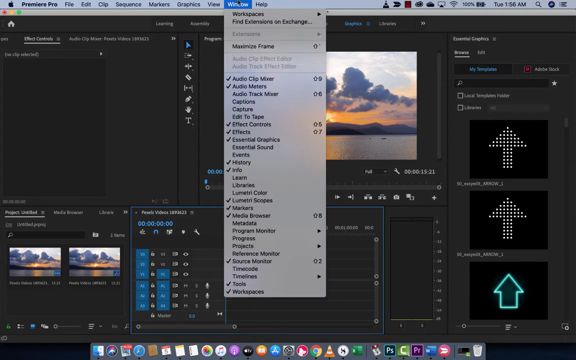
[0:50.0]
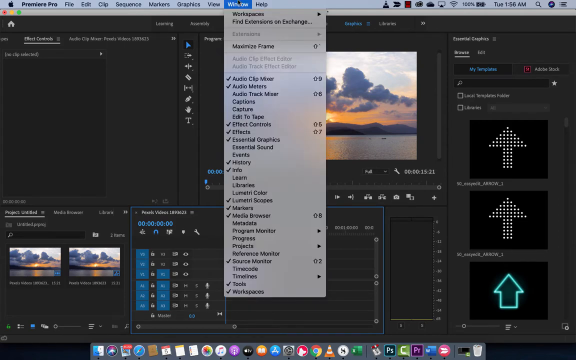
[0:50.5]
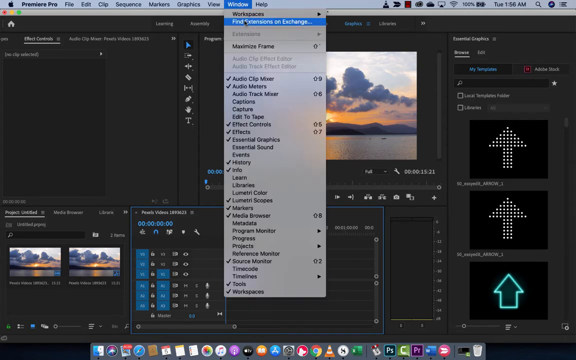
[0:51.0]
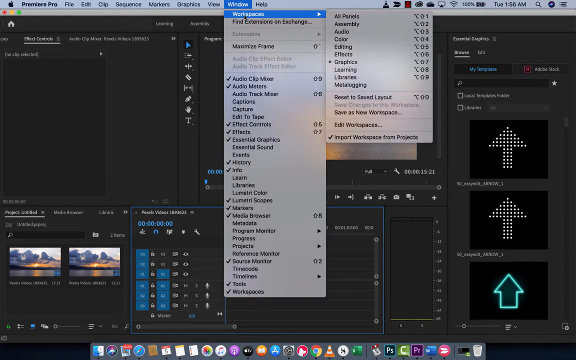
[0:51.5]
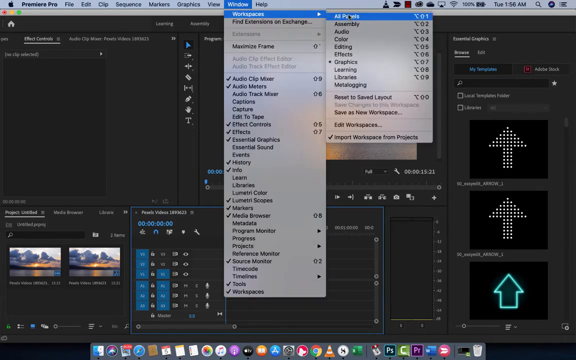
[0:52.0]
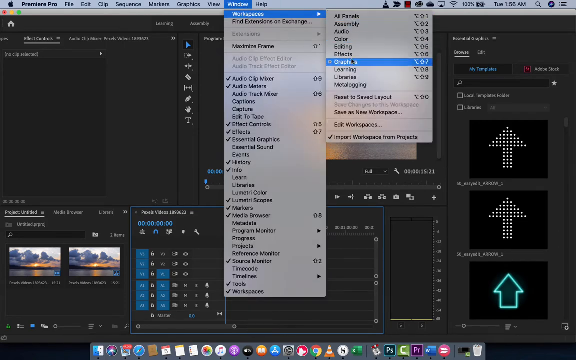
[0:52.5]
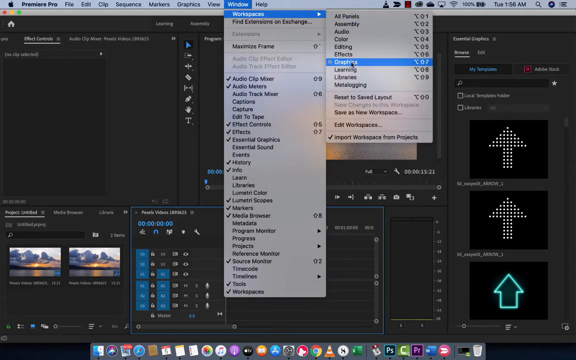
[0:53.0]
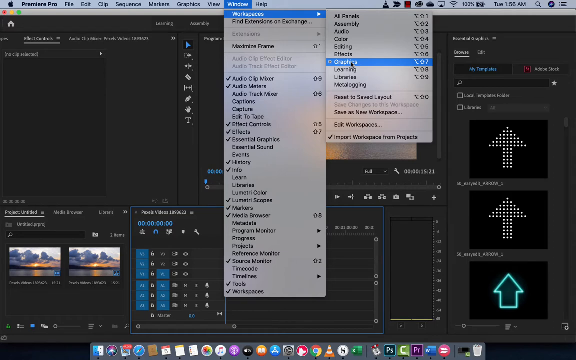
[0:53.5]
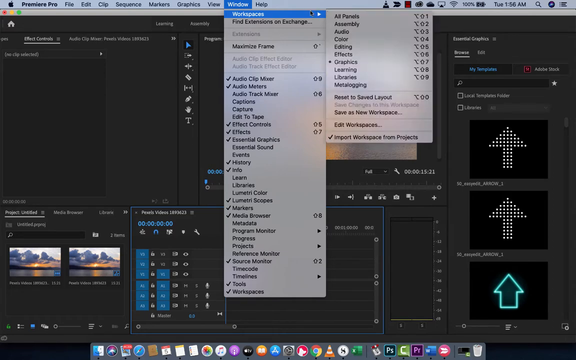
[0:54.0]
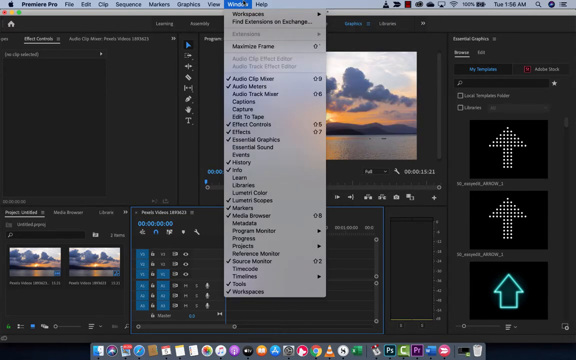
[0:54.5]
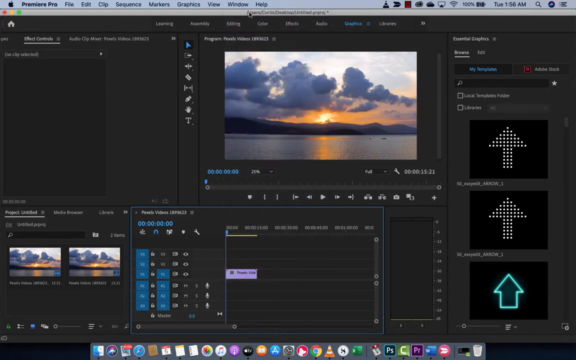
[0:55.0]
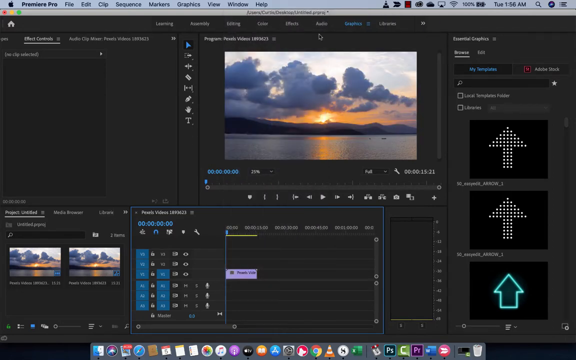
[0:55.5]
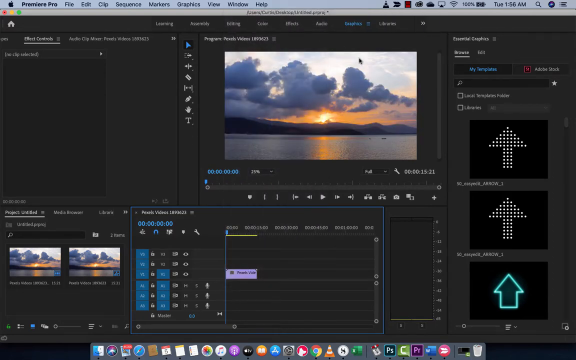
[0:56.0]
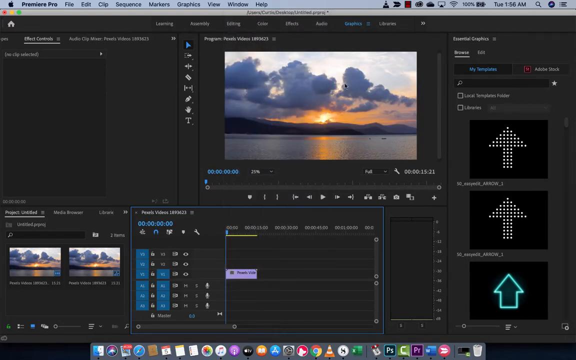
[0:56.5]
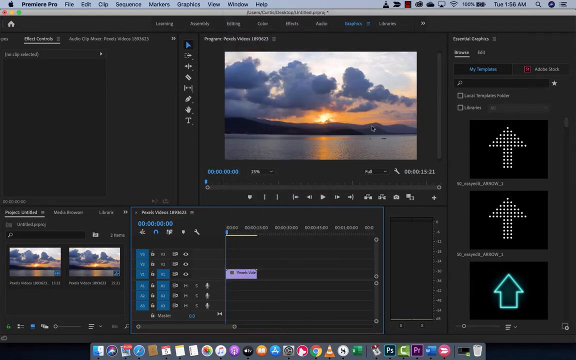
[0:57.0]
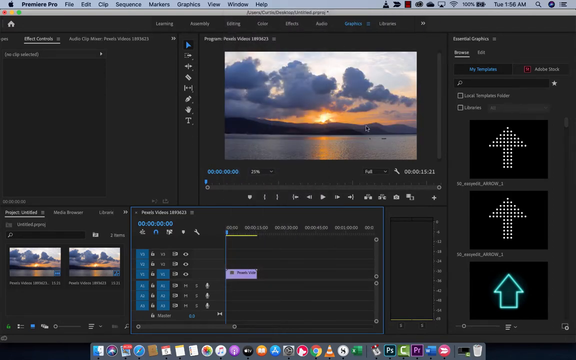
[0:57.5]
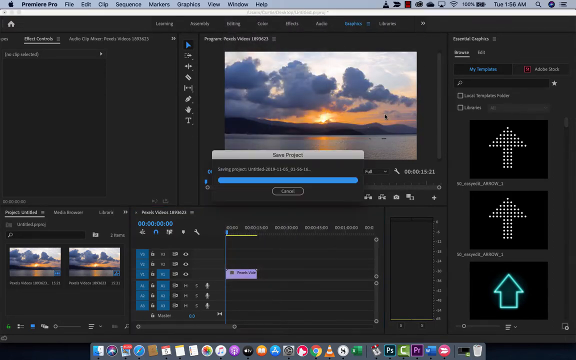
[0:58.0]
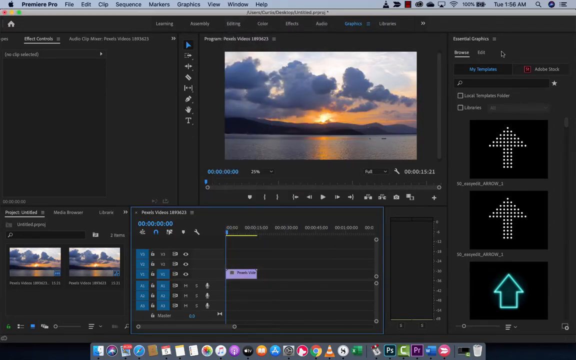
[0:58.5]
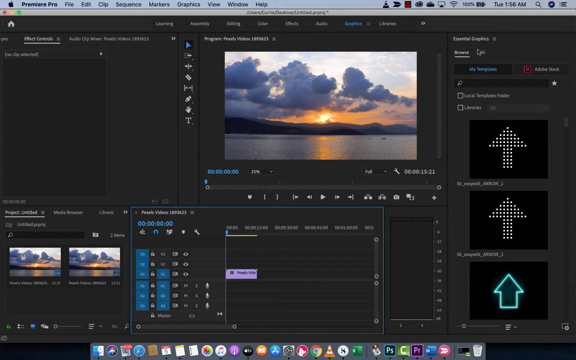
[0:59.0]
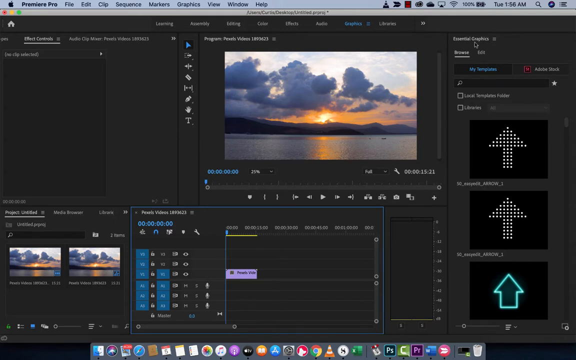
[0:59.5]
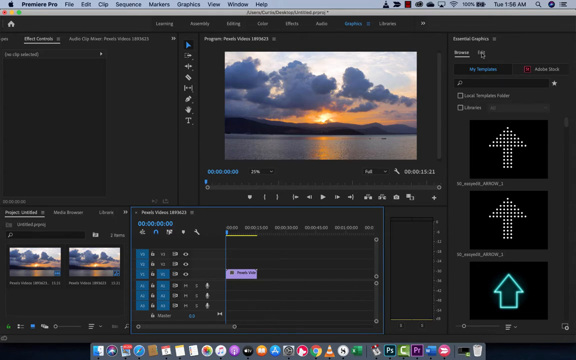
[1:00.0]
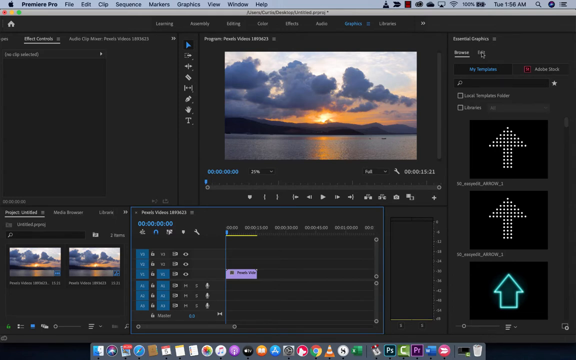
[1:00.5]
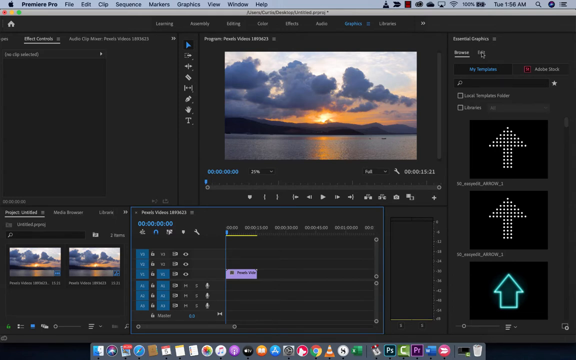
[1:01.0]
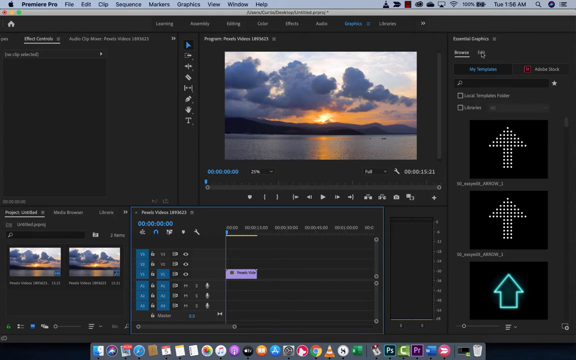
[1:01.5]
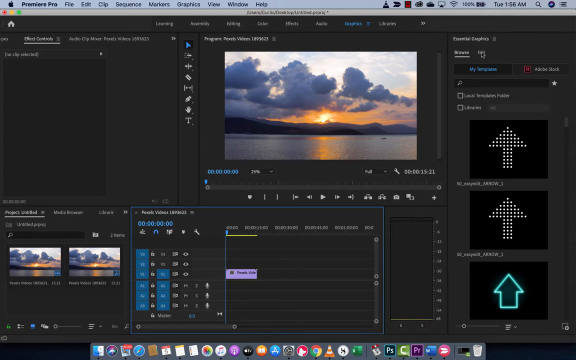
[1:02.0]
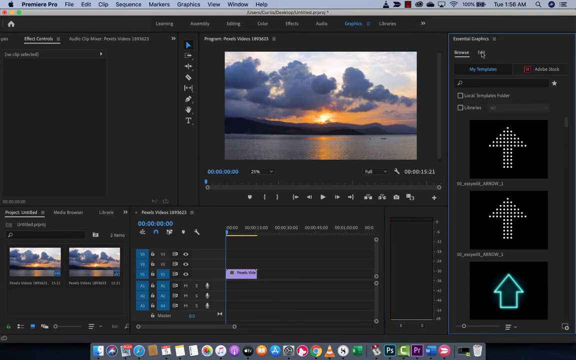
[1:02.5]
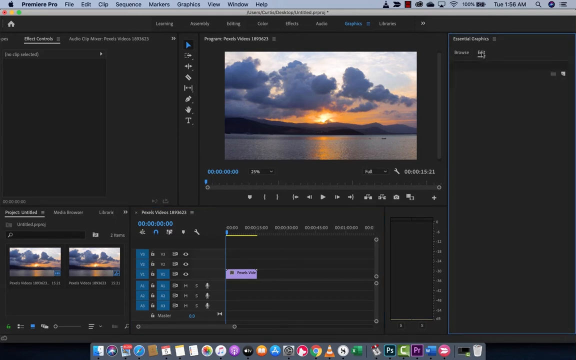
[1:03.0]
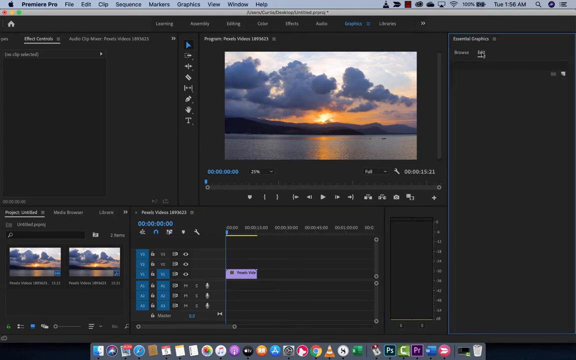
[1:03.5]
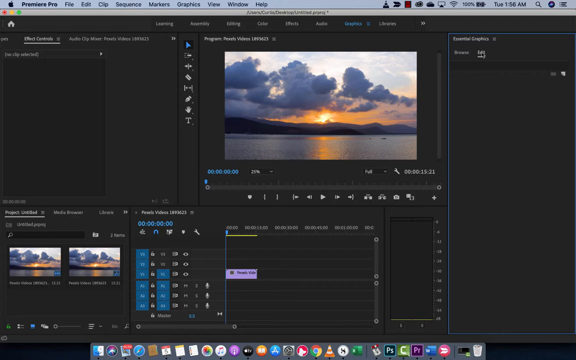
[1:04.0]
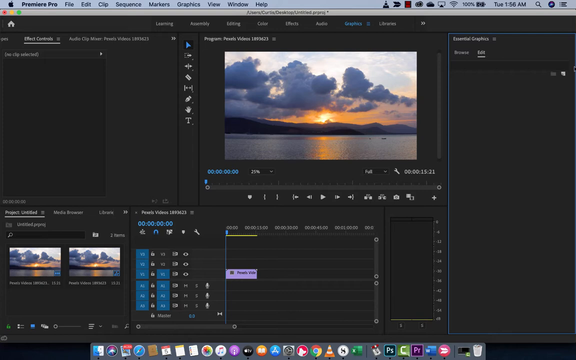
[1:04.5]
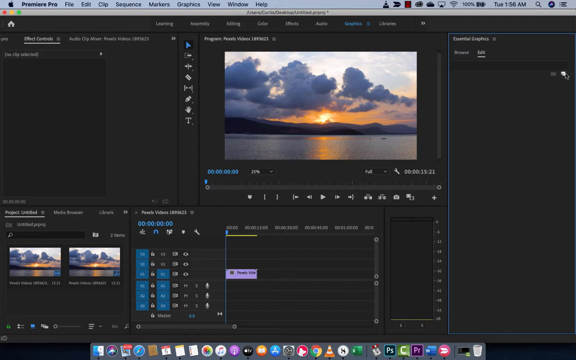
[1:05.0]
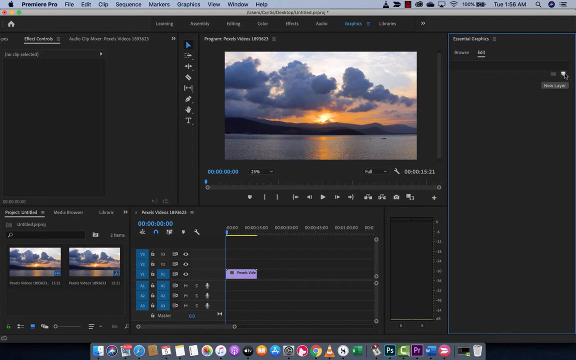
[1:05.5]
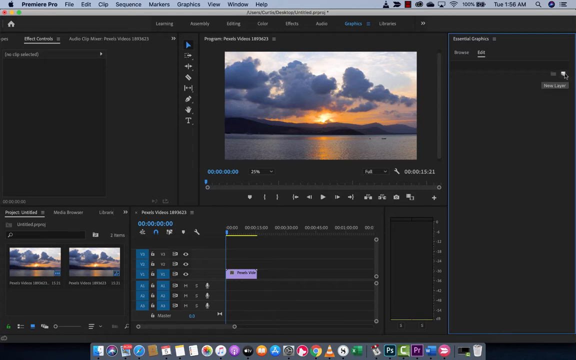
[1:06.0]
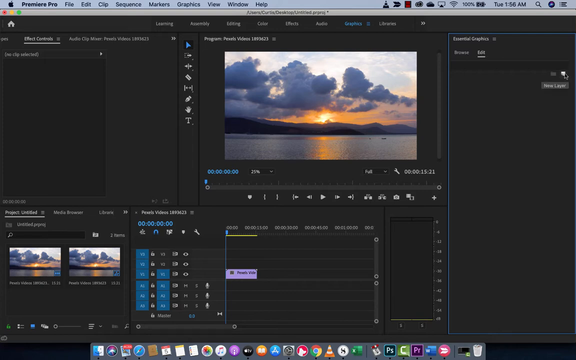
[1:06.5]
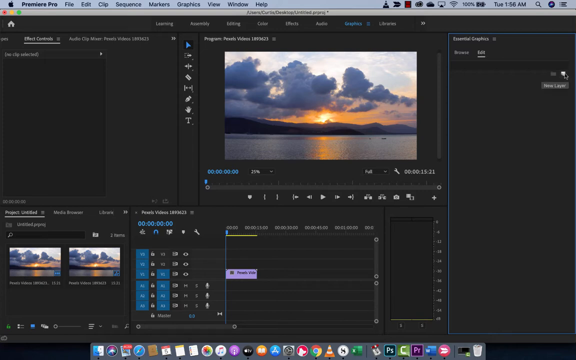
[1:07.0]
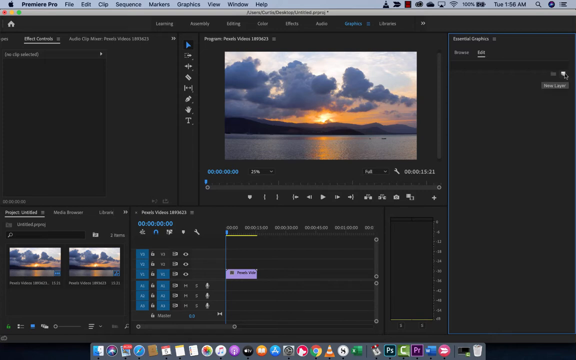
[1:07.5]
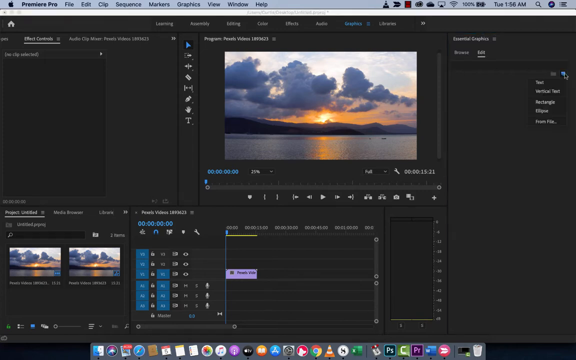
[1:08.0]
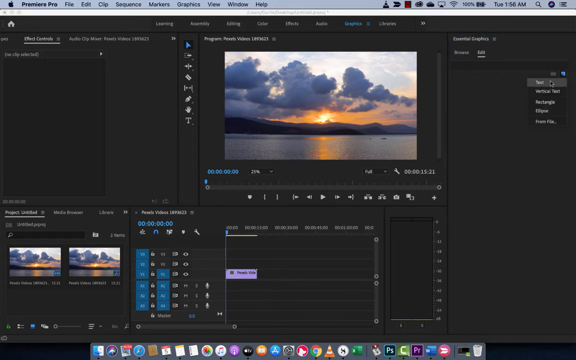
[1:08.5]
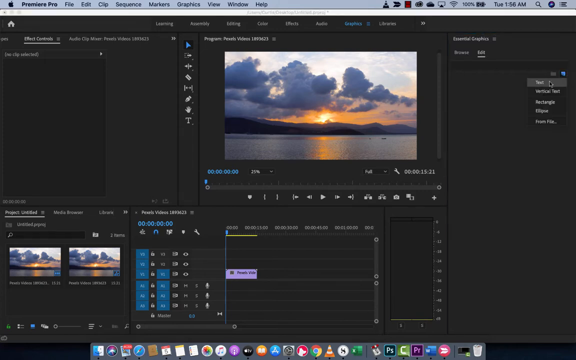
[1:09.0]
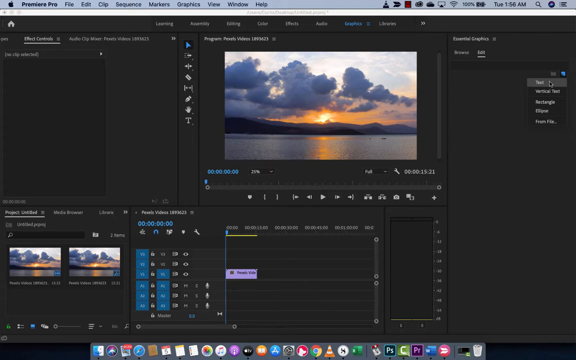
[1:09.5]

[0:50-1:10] An editing program labeled "Premiere Pro" shows many different features in various parts of the screen. Prominently, the mouse cursor has highlighted "Window", and a drop-down box shows many options, many of them with check marks next to them. The cursor moves slightly down and highlights "Workspaces", then moves to the right and highlights the top option. It goes down to "Graphics", then leaves that section and touches on various points. It clicks on the picture and goes to the right, where a new box appears that apparently says "Graphics". The cursor highlights a little white box at the bottom right, which brings up a small box just below it. Then a new icon box appears, and the mouse moves over it and highlights its very top option.